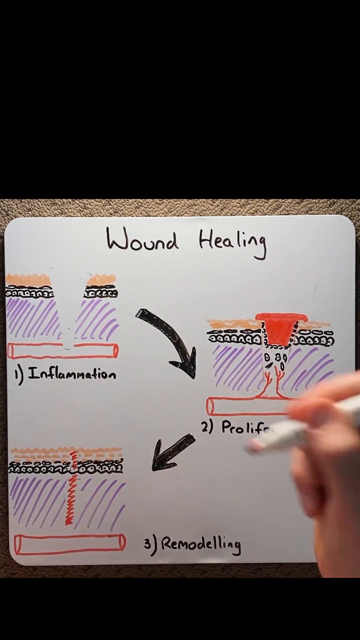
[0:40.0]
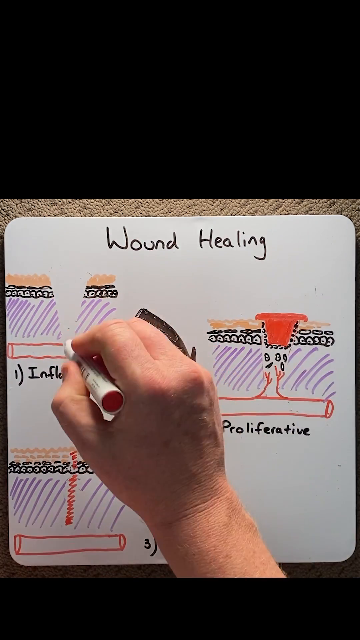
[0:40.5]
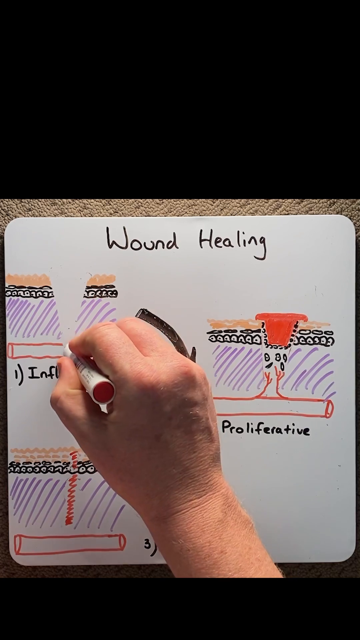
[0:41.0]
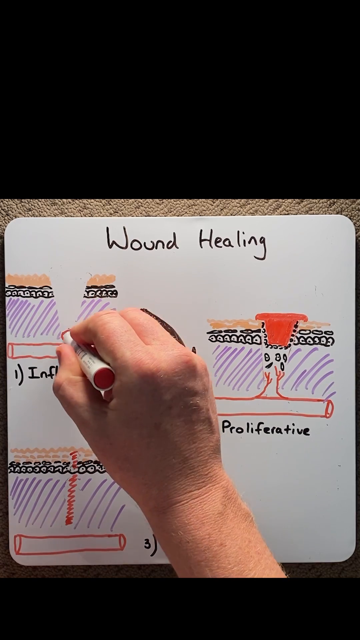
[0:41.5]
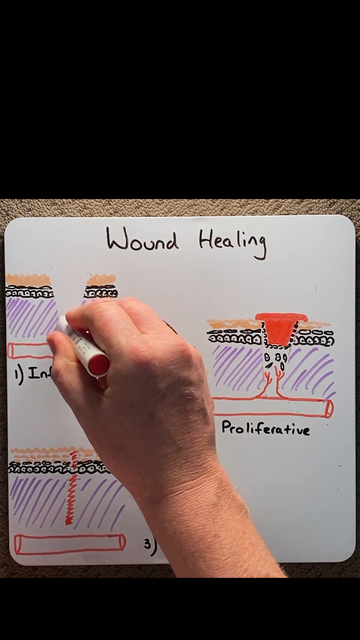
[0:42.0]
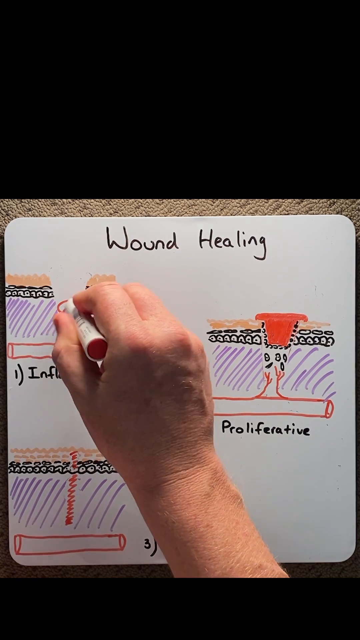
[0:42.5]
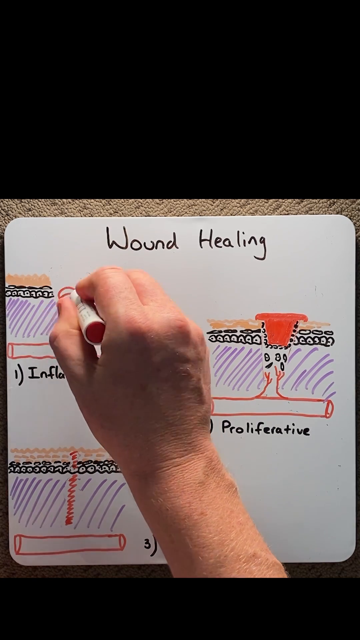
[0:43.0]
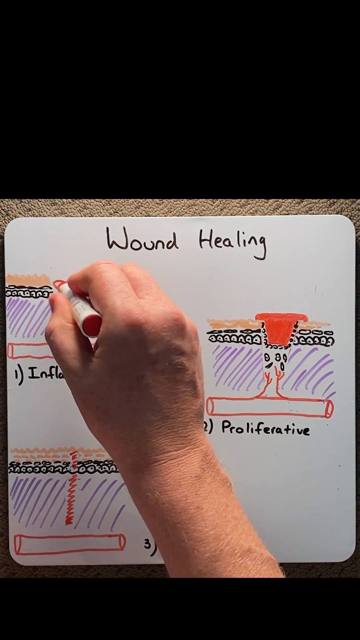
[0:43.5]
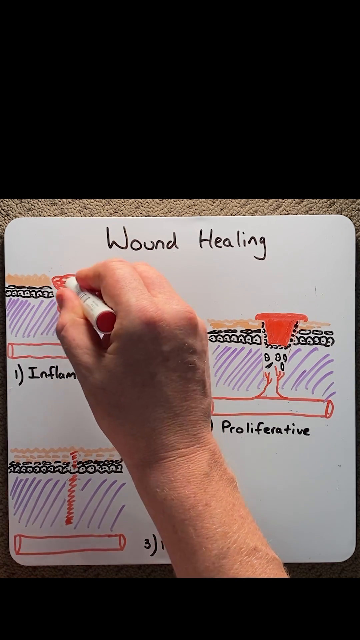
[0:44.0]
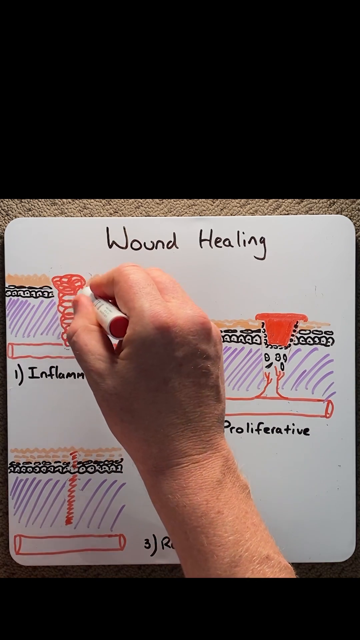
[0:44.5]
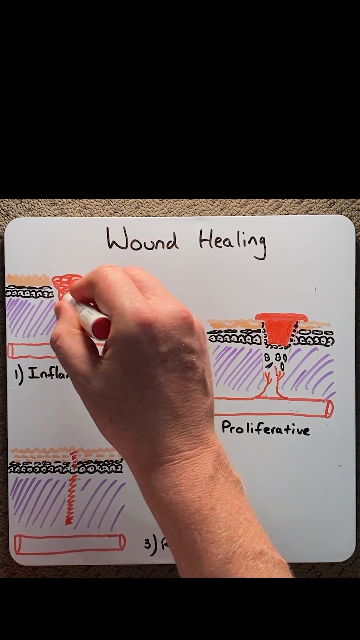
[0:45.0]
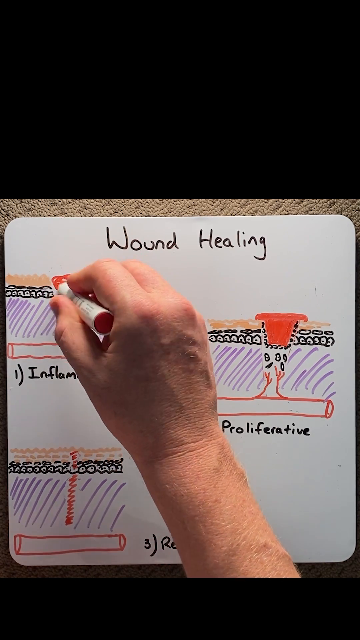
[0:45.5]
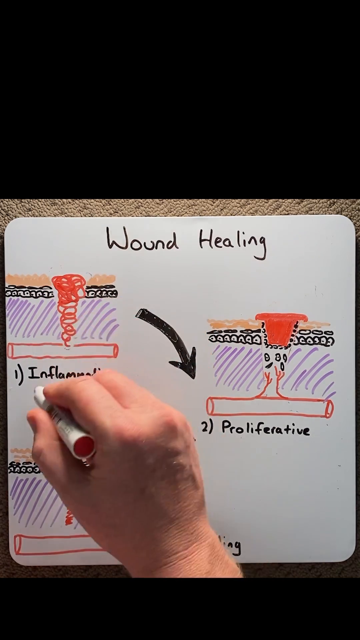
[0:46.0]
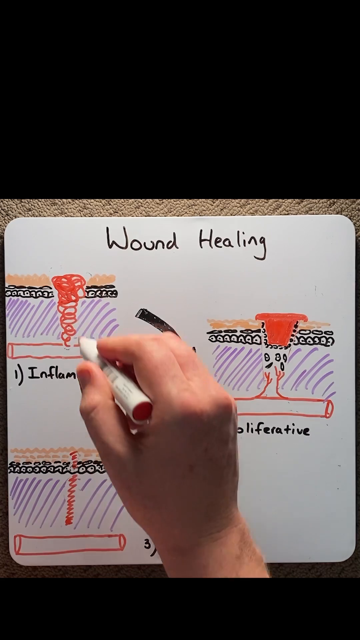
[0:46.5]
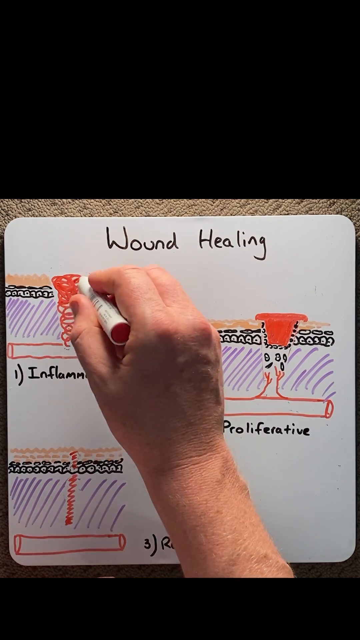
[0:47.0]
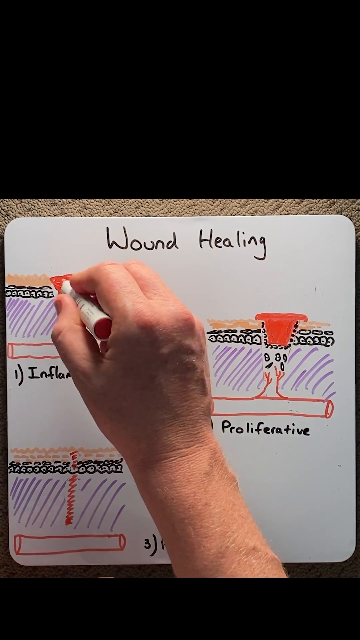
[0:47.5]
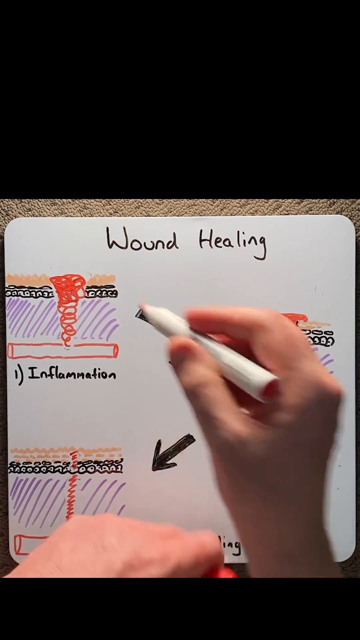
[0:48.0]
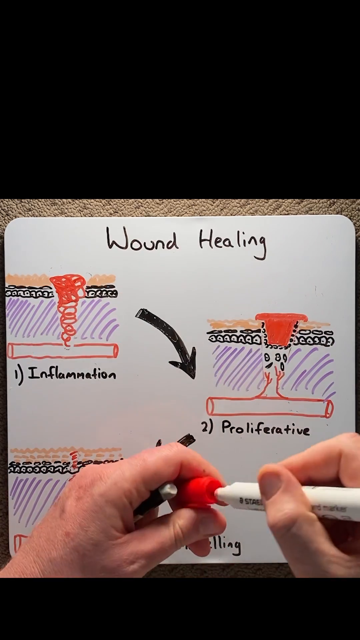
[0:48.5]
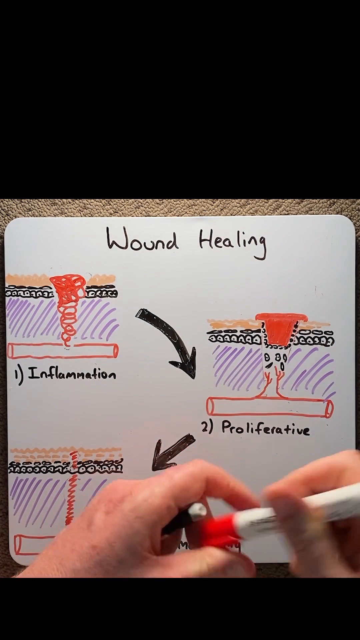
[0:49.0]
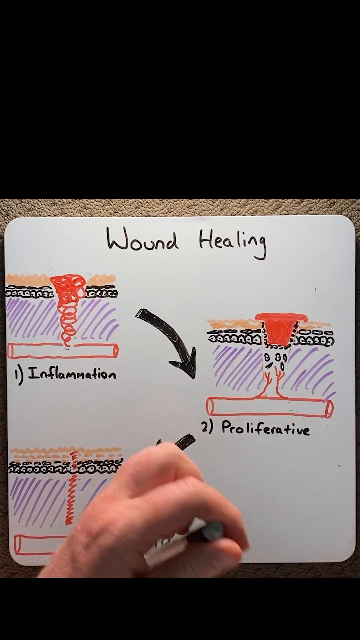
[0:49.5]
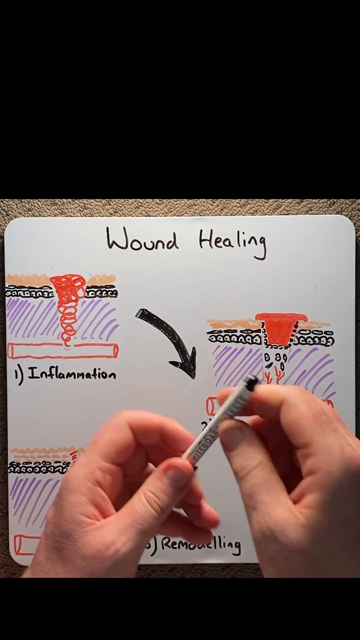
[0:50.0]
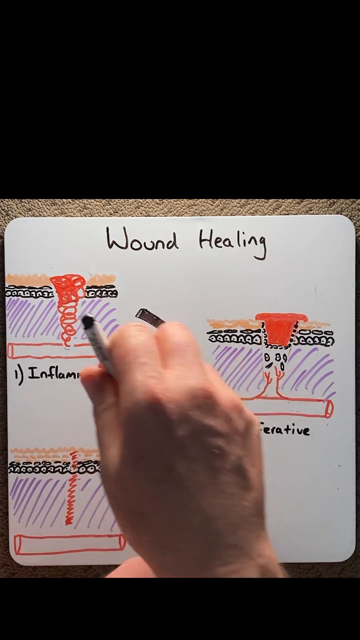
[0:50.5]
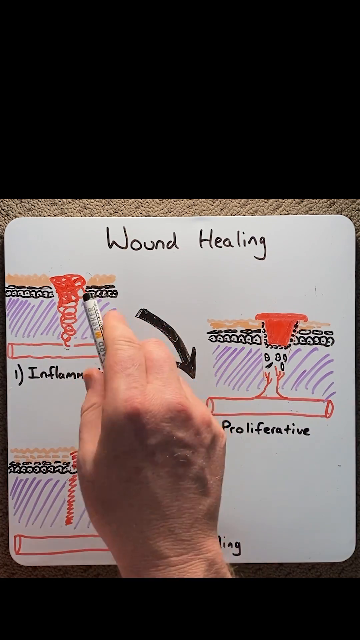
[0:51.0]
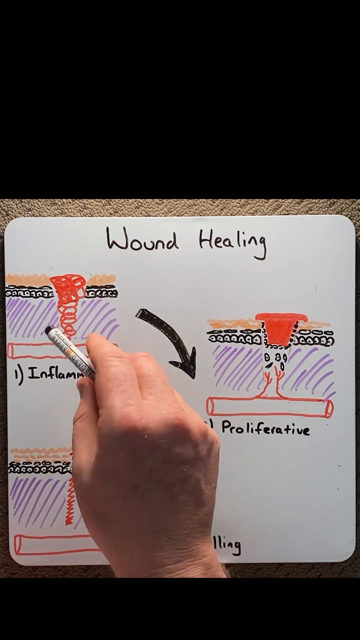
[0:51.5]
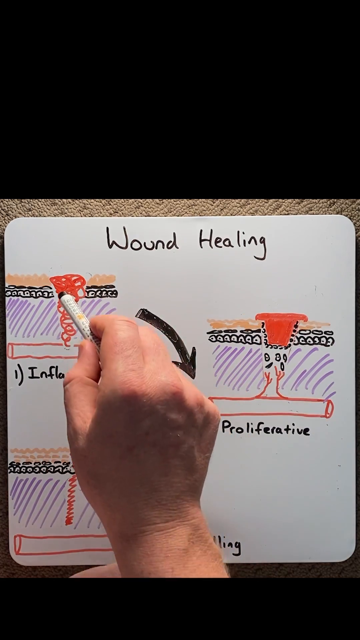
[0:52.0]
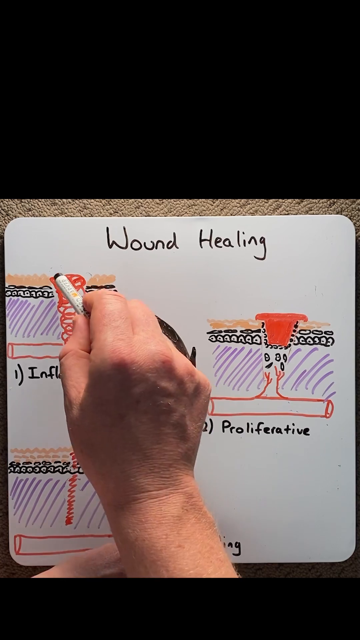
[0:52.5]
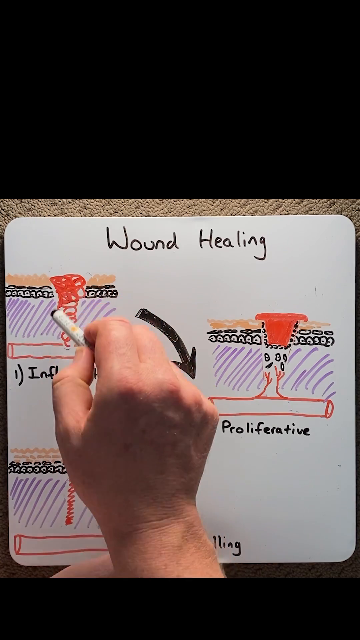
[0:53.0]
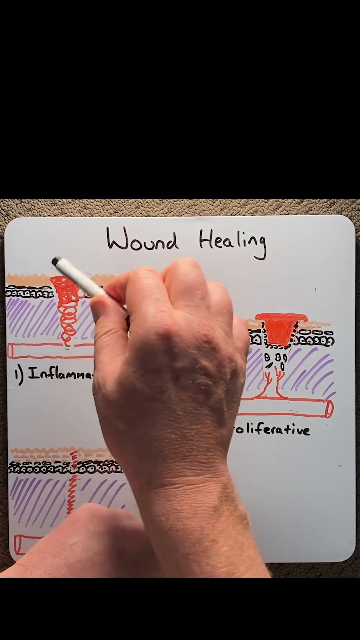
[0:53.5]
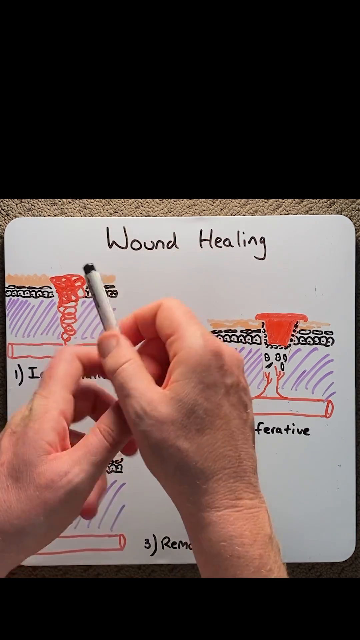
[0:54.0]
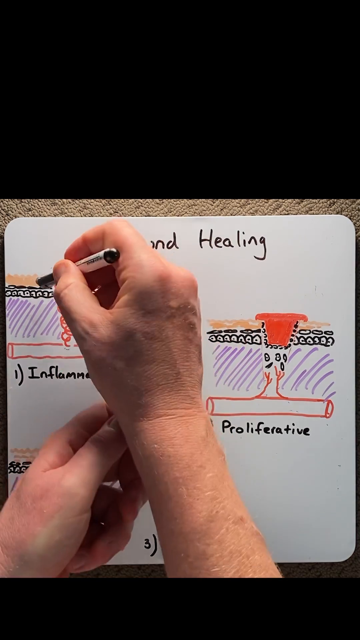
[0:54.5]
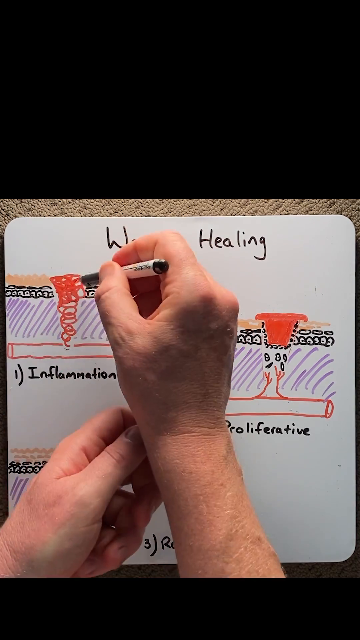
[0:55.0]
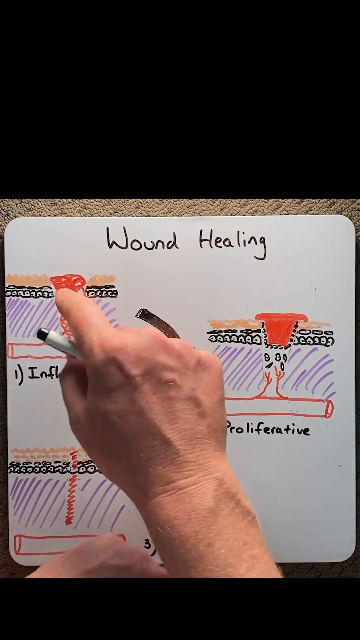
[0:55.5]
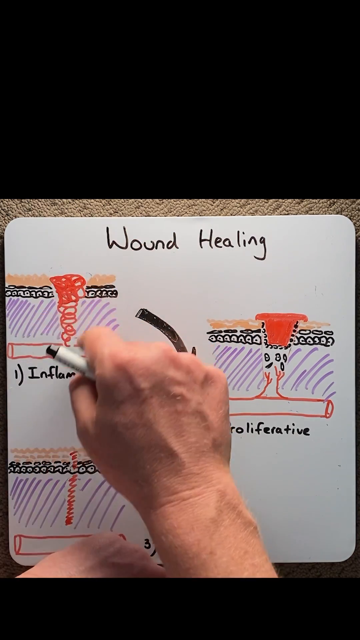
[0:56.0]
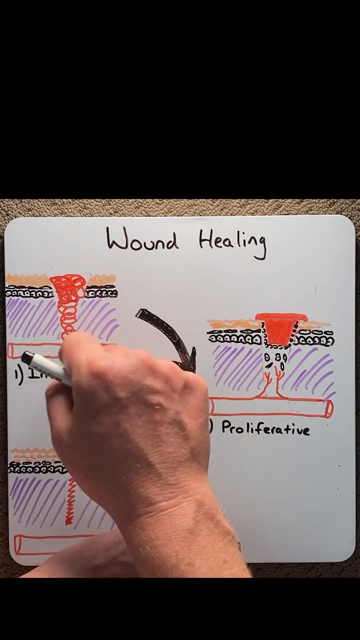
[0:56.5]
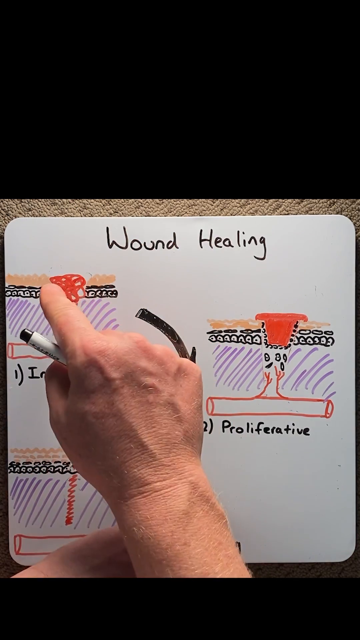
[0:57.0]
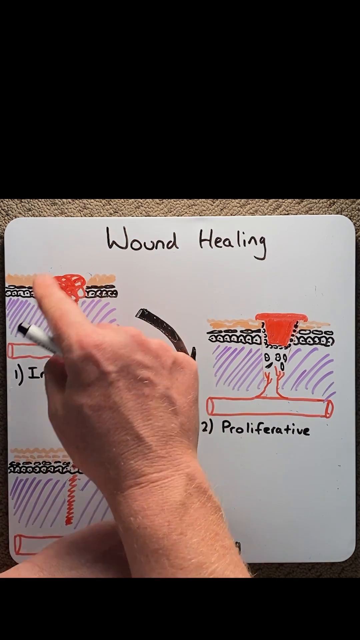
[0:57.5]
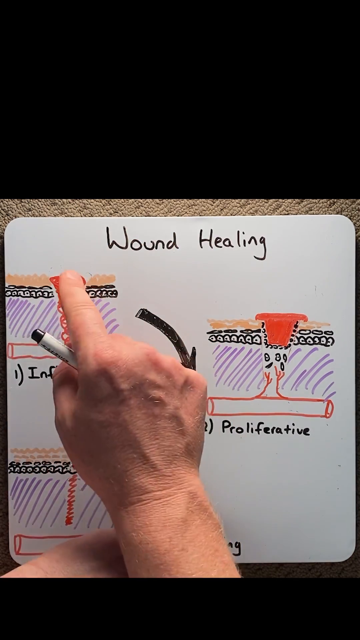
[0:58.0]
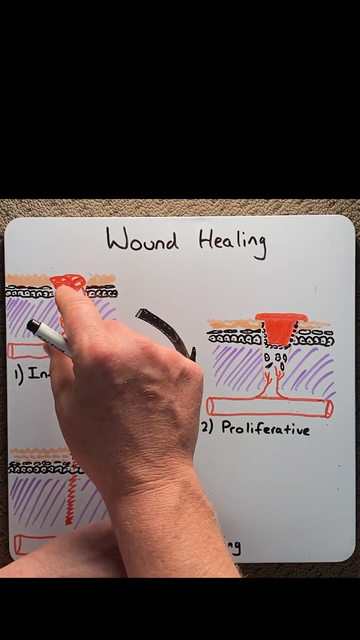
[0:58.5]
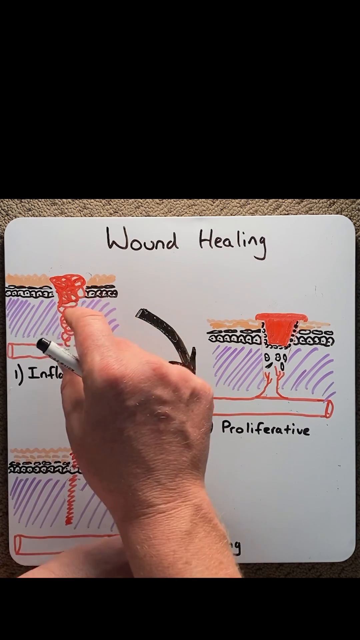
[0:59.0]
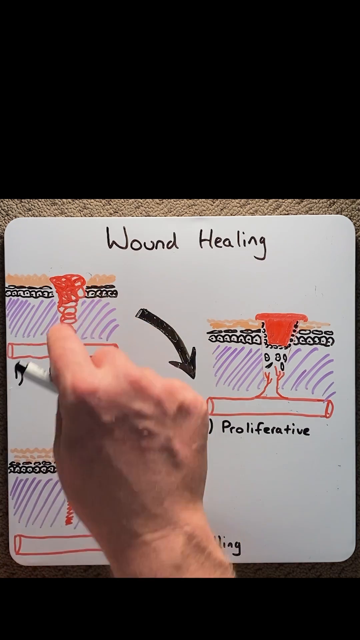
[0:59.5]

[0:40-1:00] The whiteboard drawing shows the process of wound healing, drawn in real time. The man is showing the process of inflammation: skin that gets a cut, shown by an indent in the marker drawing of the skin, which then becomes inflamed, with blood rising out of the wound. The three steps are inflammation, proliferative and remodeling, each with an arrow pointing to the next in sequential order. The man makes motions to show how the inflammation builds up in the wound. His hands are rather large, and he uses a red marker as he draws the wound filling up.